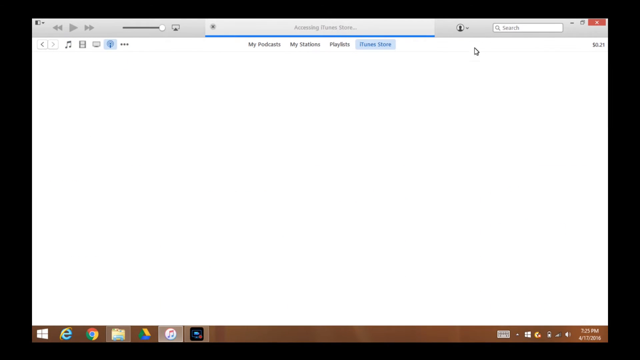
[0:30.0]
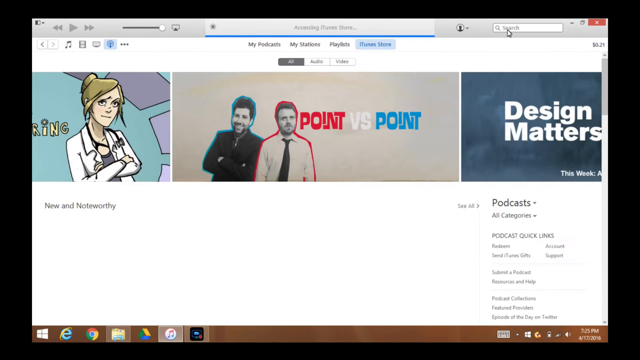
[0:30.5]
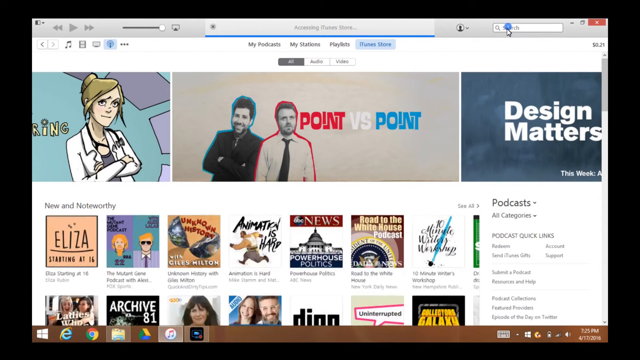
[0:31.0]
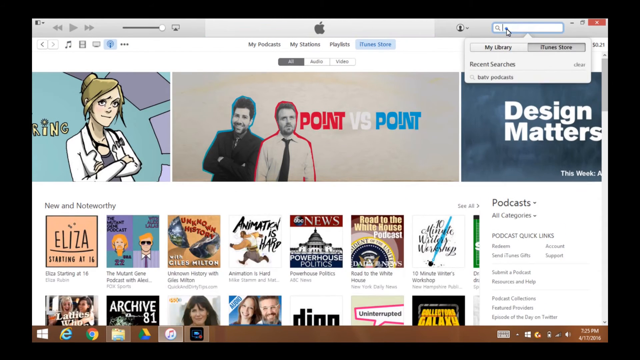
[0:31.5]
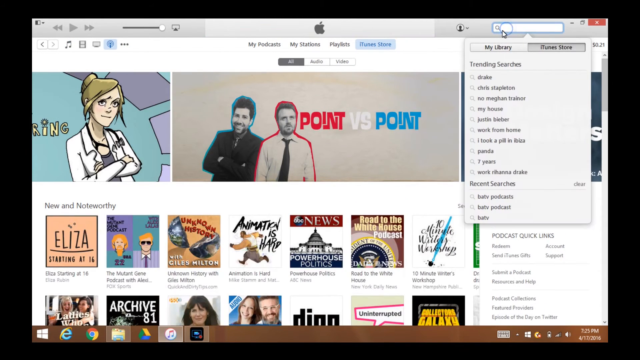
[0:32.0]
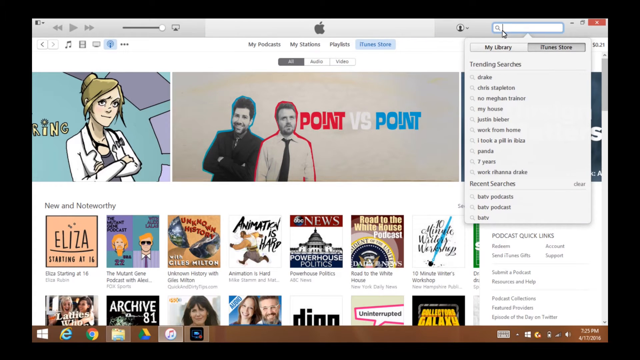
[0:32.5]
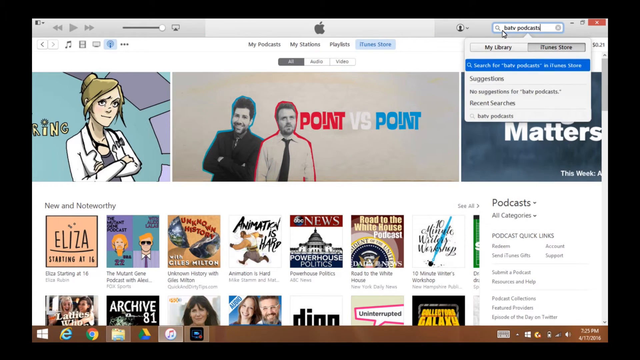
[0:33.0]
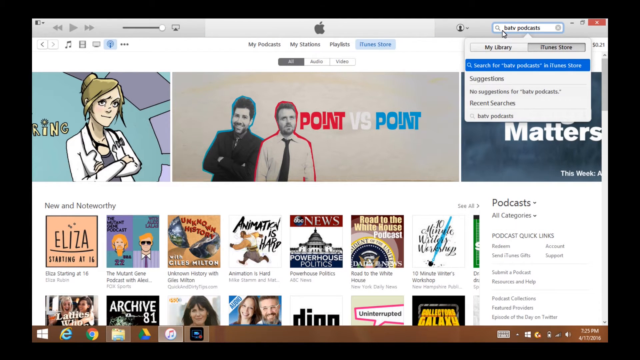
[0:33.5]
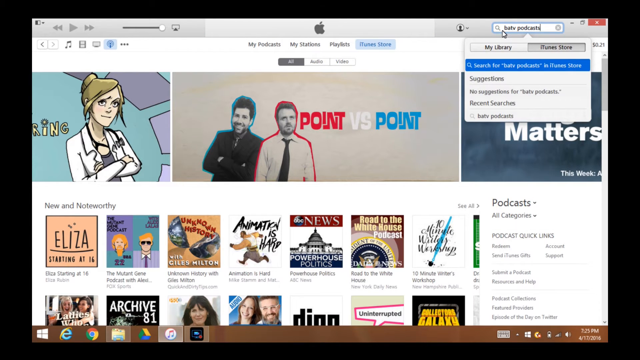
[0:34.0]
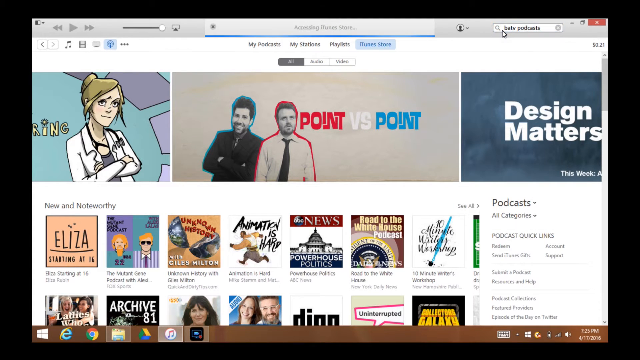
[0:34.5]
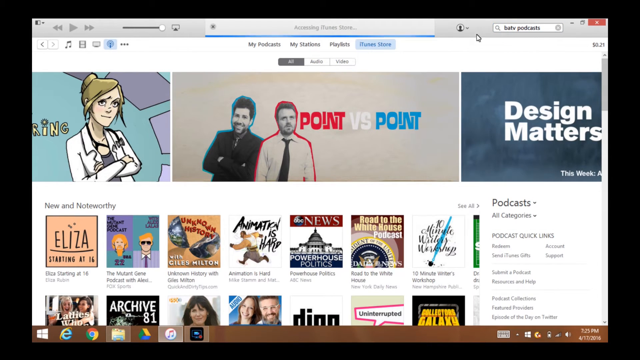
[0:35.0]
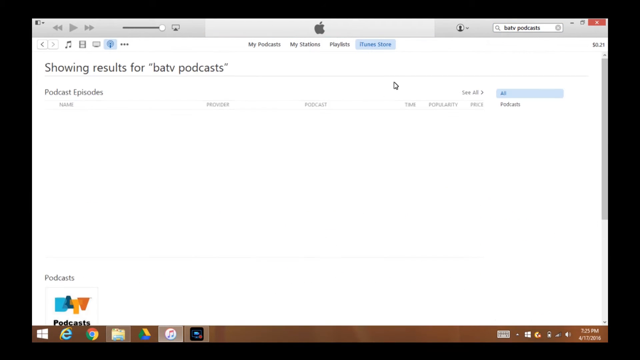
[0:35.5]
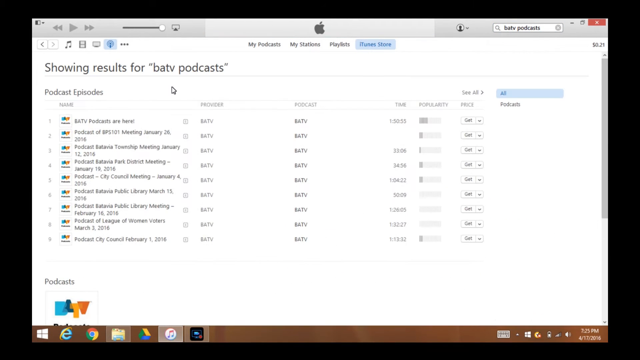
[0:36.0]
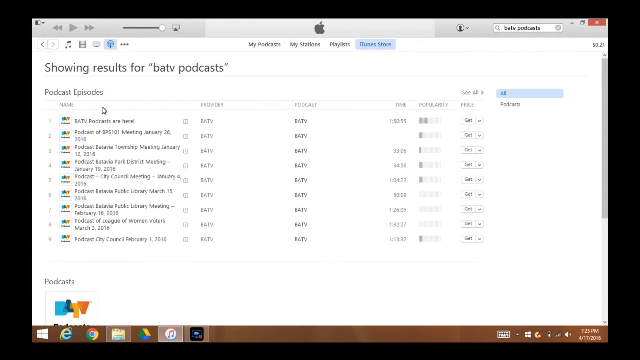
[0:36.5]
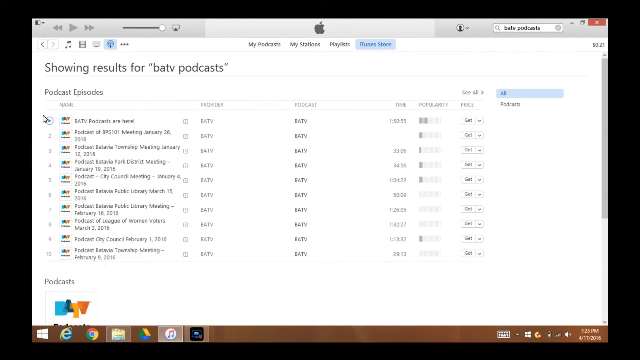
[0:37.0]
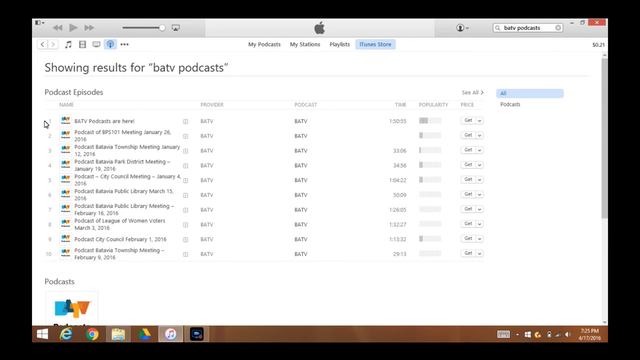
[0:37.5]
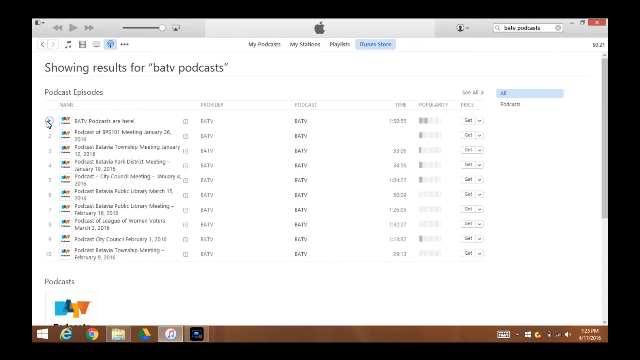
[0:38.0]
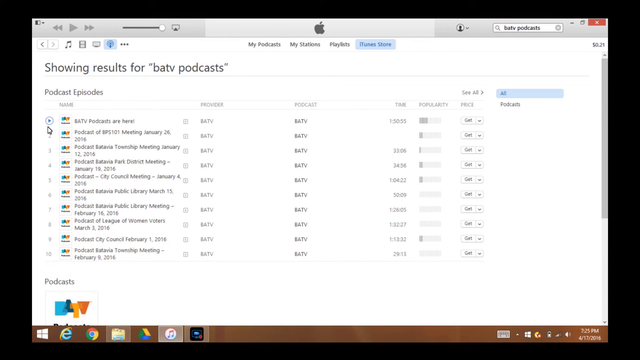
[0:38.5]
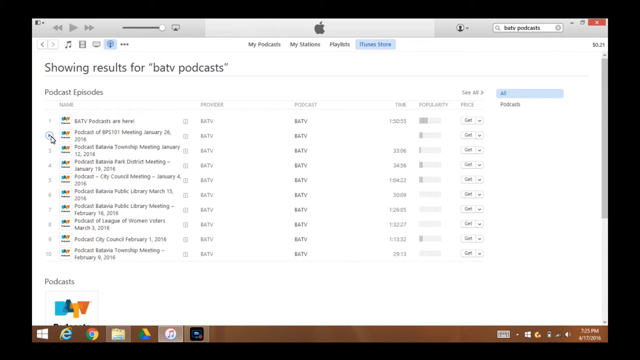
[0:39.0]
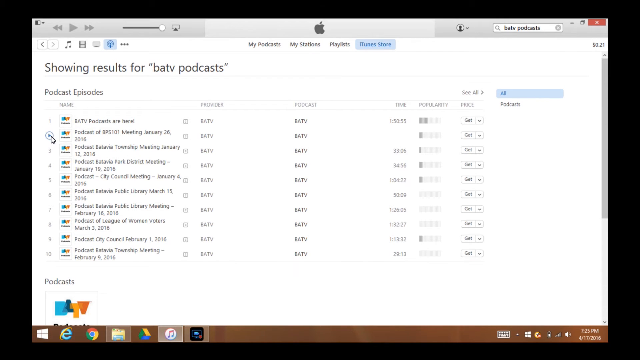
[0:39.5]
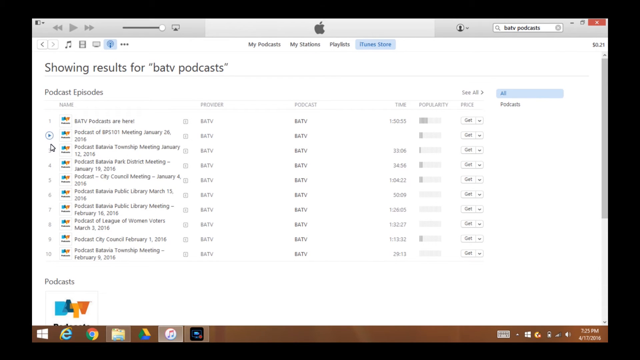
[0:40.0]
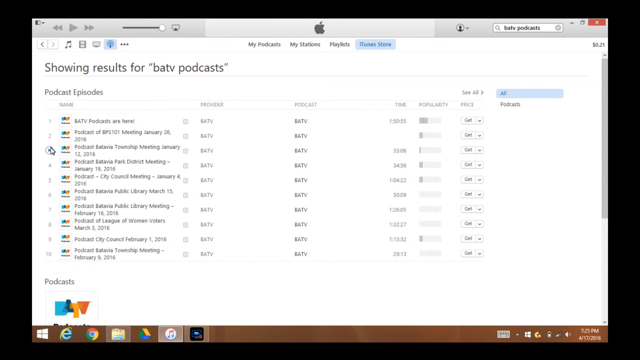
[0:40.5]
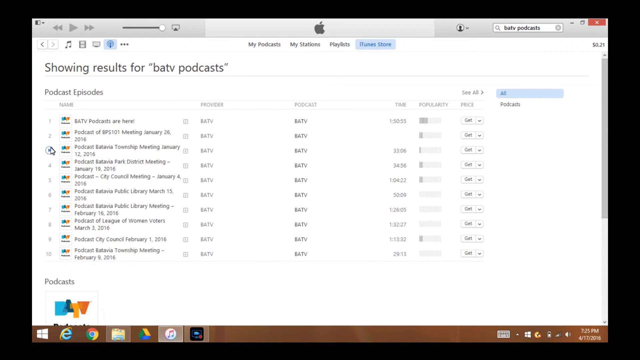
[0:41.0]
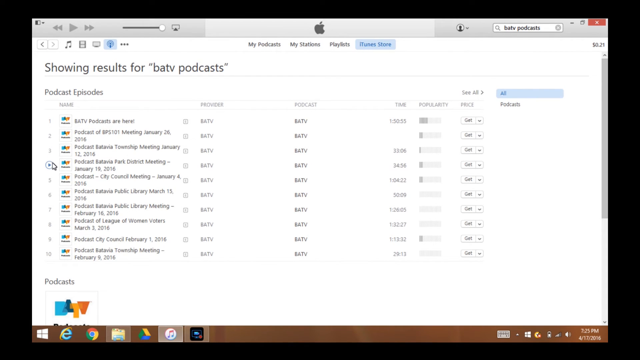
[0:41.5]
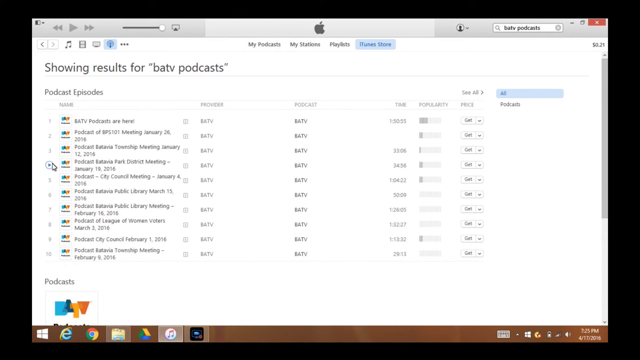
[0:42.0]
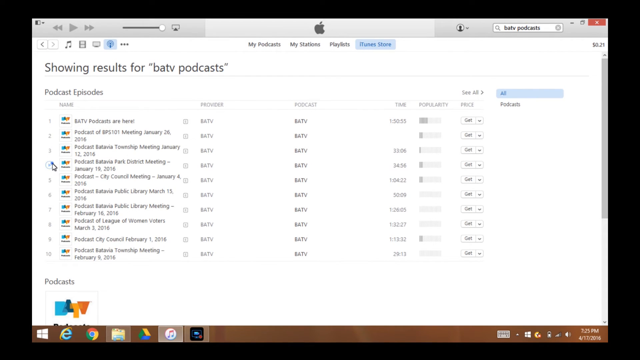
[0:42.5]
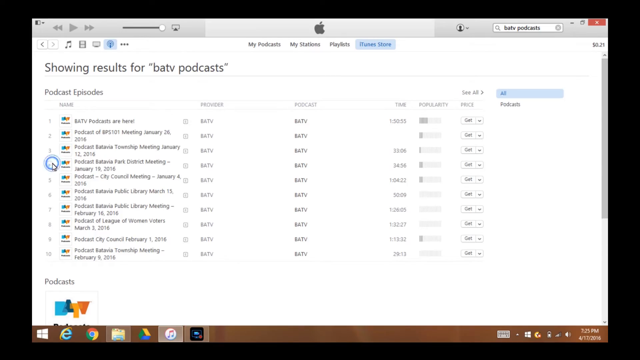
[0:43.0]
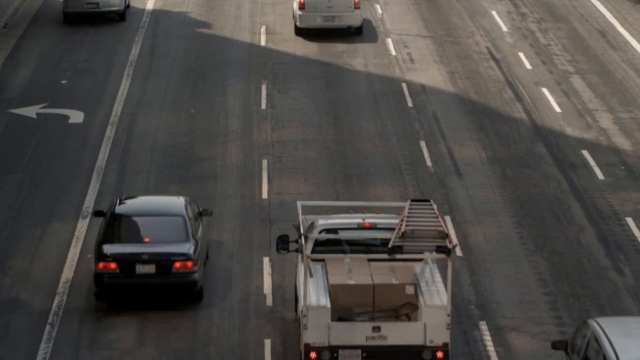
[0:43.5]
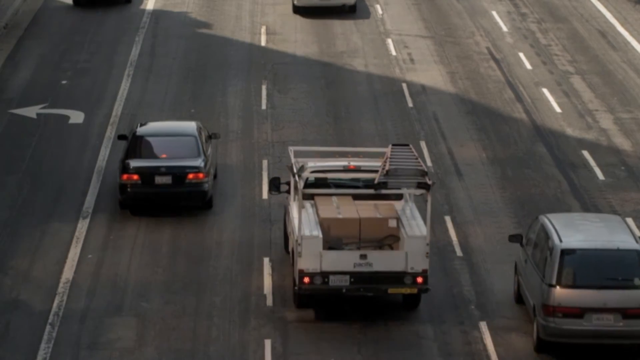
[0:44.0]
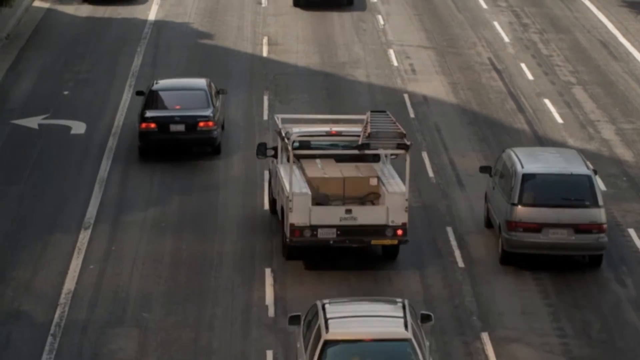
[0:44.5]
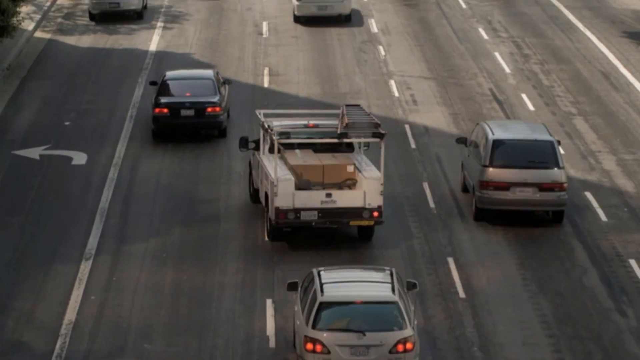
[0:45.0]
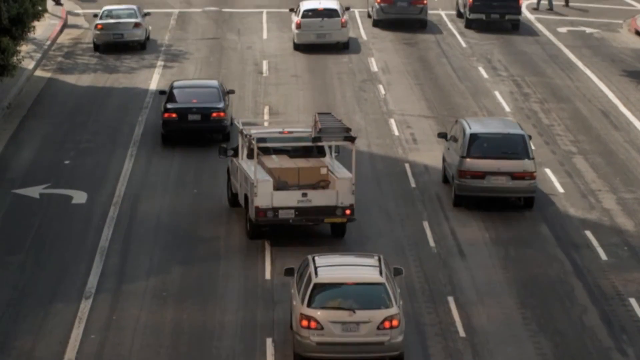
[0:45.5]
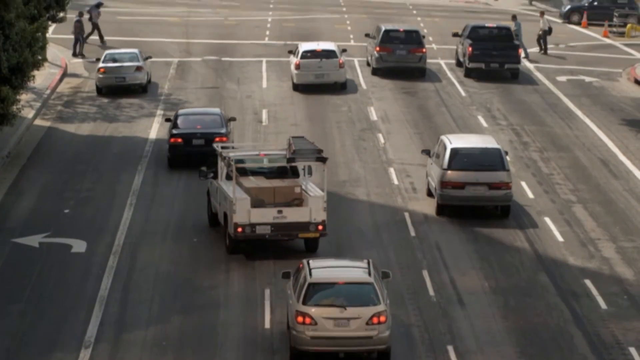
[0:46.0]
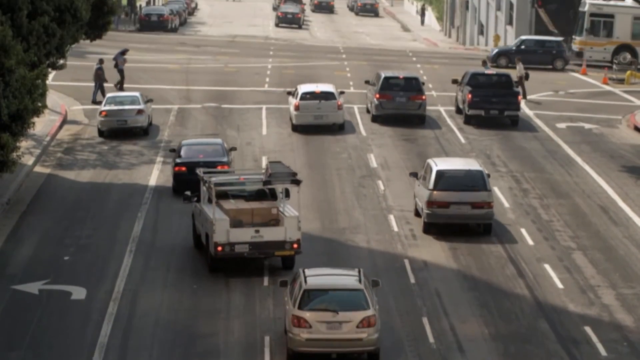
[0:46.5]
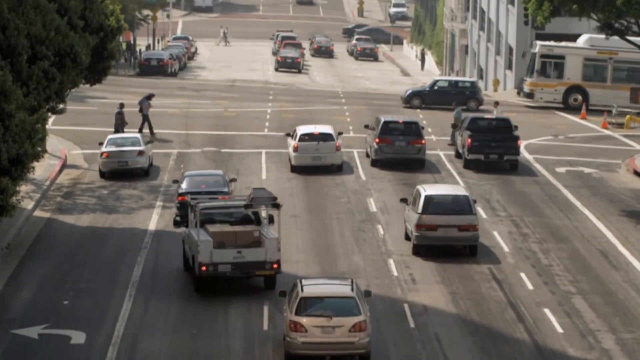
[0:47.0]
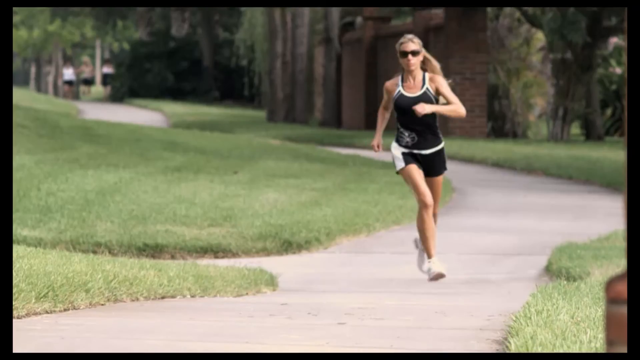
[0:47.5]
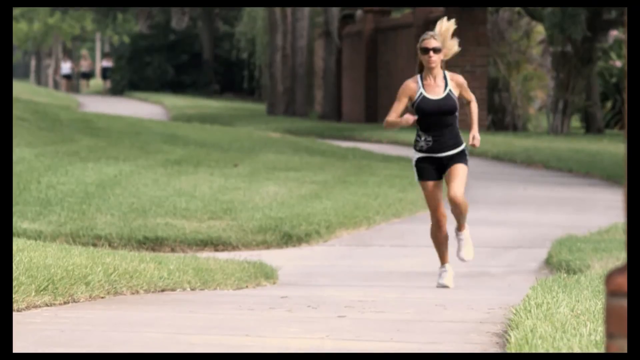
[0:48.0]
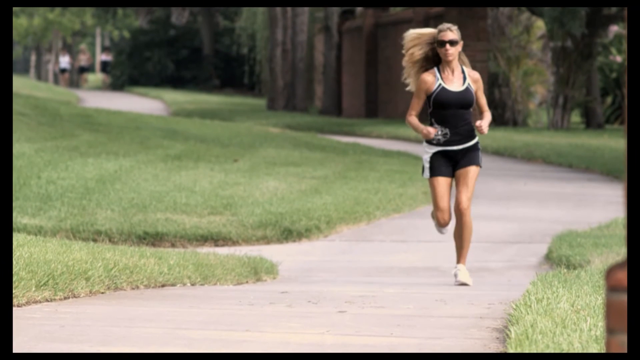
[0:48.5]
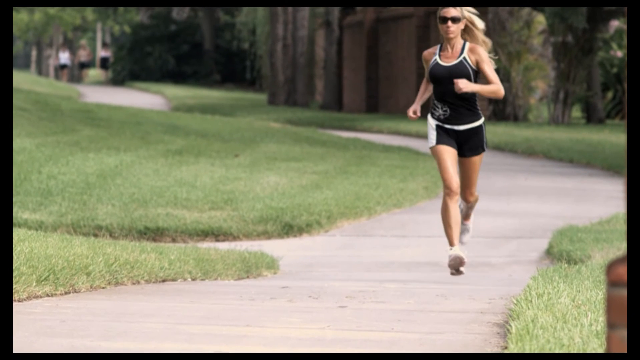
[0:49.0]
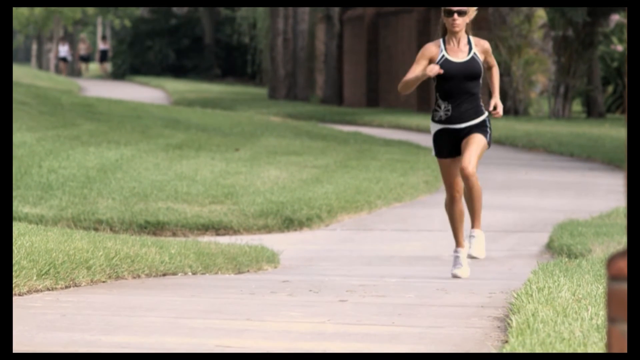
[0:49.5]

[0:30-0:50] A laptop or computer shows what is described as a resource for a TV podcast, and someone is clicking on it, selecting a file. The laptop has an Apple logo and is loaded with many things, including cartoons and movies. Cars appear. A woman with long blonde hair, wearing spectacles, a black shirt and a black and white sleeveless top, is running. There is grass and there are trees. Behind her are three other people whose gender cannot be made out. A van, a black car, a cream car and a white car appear, and a bus is crossing. People are crossing the street.